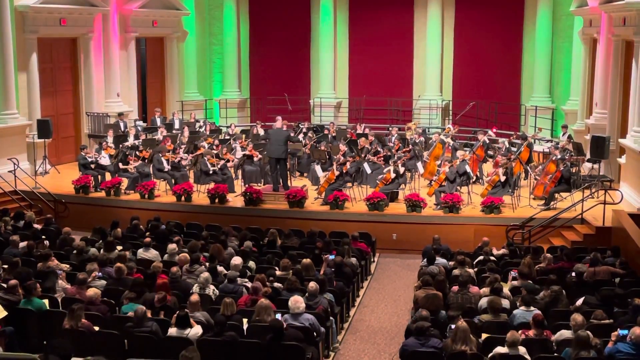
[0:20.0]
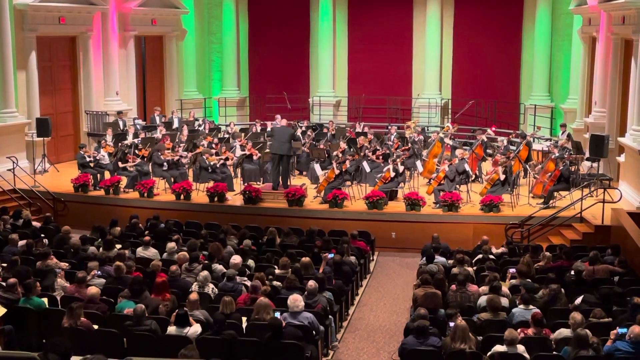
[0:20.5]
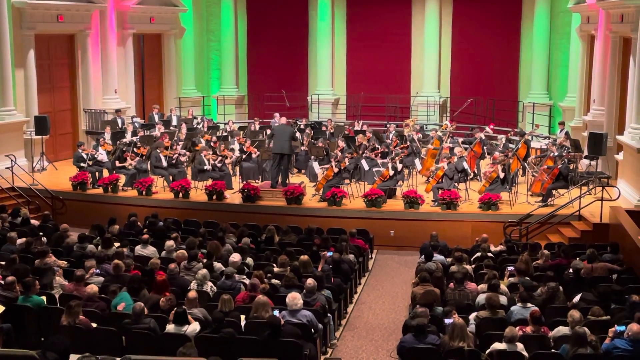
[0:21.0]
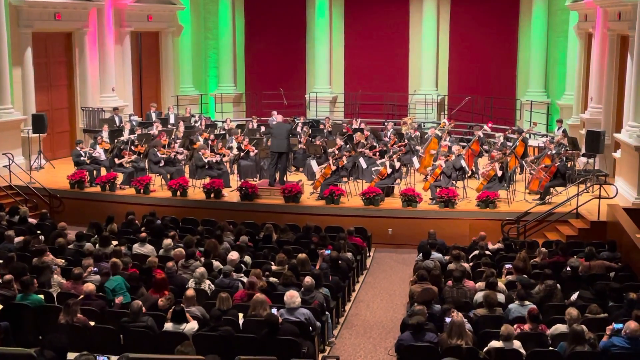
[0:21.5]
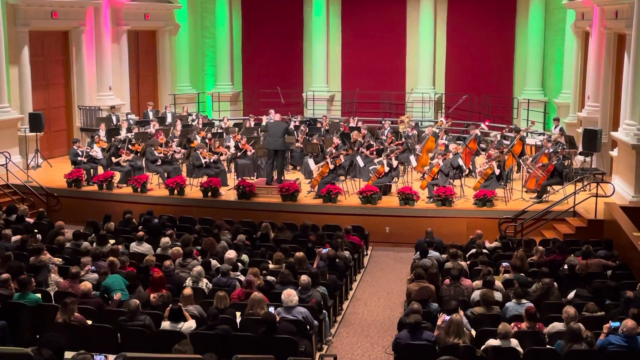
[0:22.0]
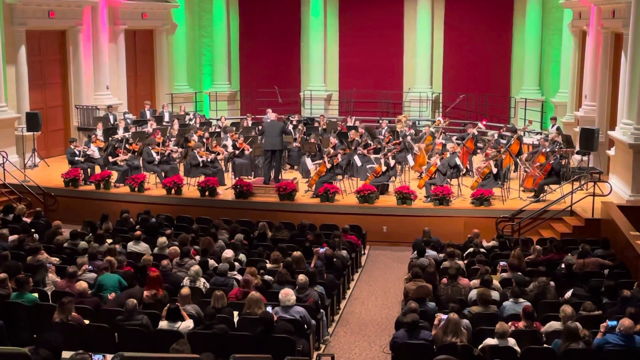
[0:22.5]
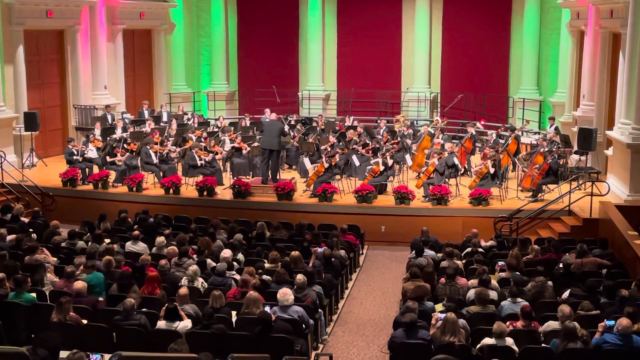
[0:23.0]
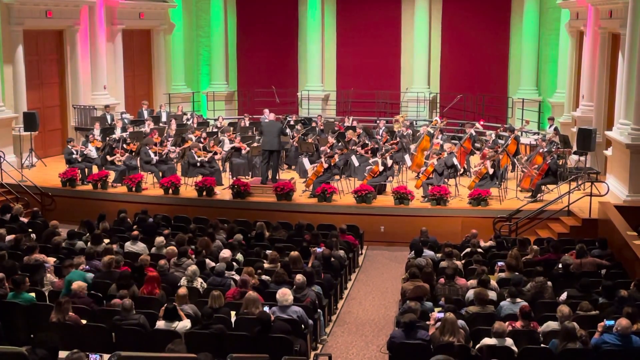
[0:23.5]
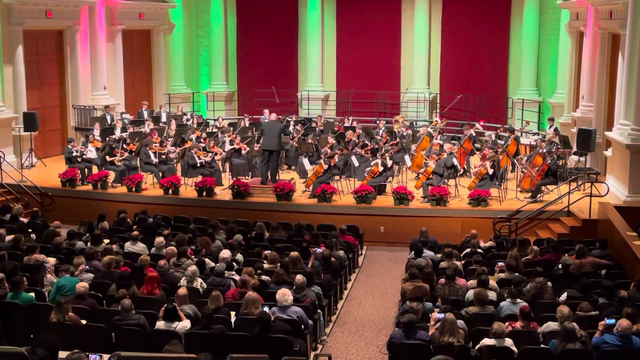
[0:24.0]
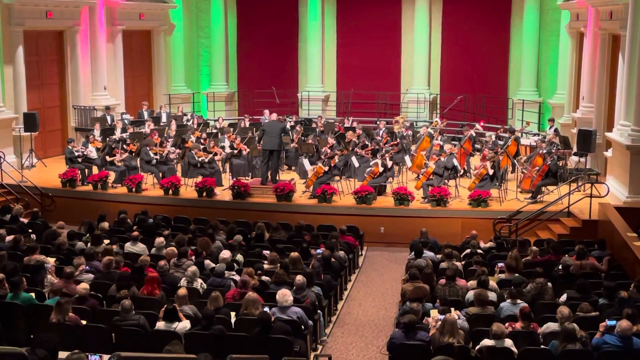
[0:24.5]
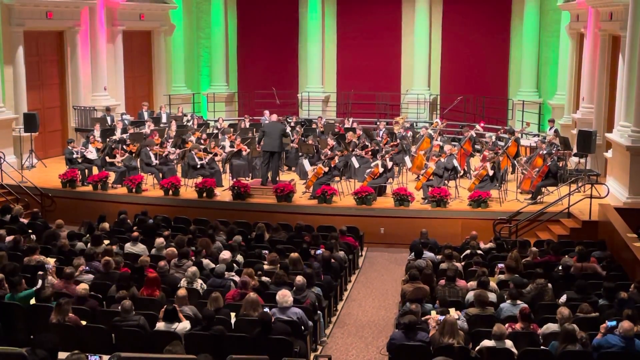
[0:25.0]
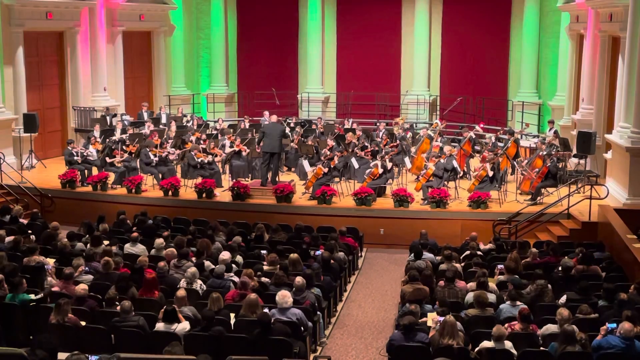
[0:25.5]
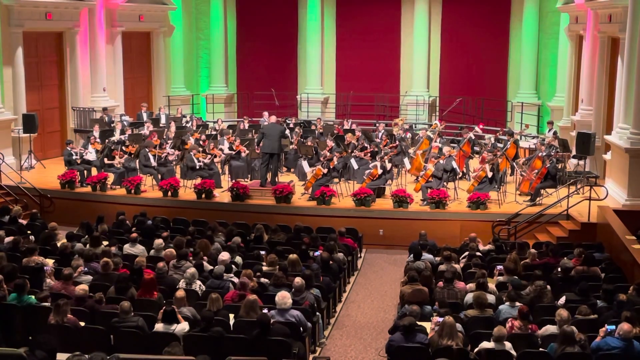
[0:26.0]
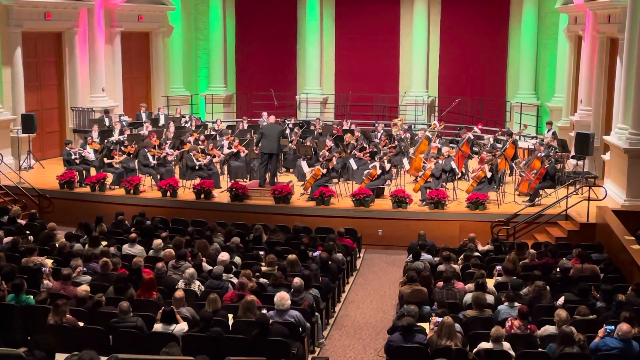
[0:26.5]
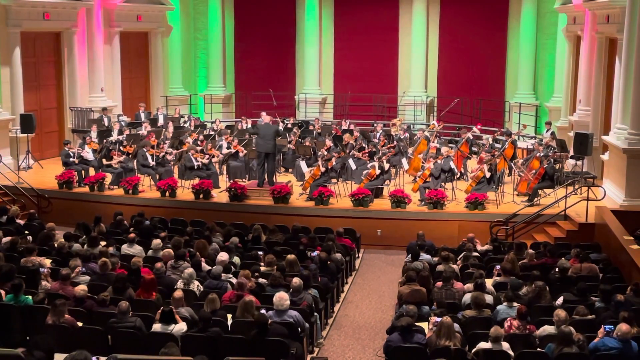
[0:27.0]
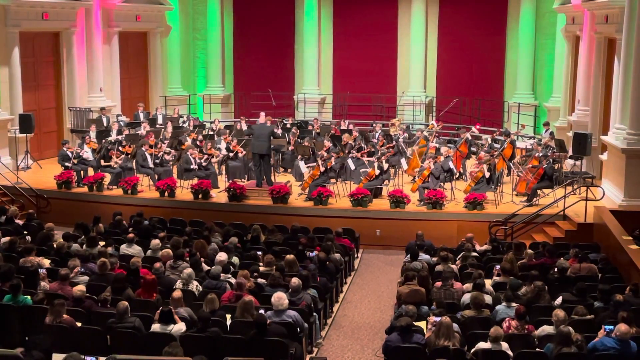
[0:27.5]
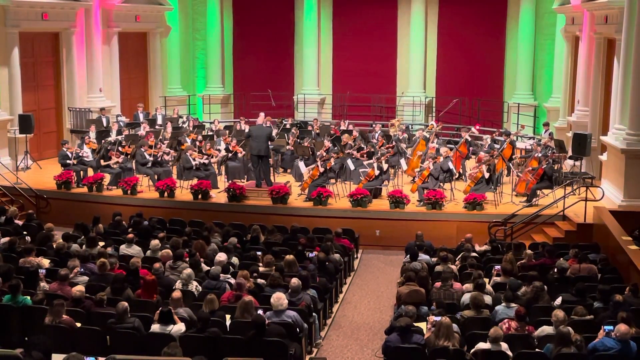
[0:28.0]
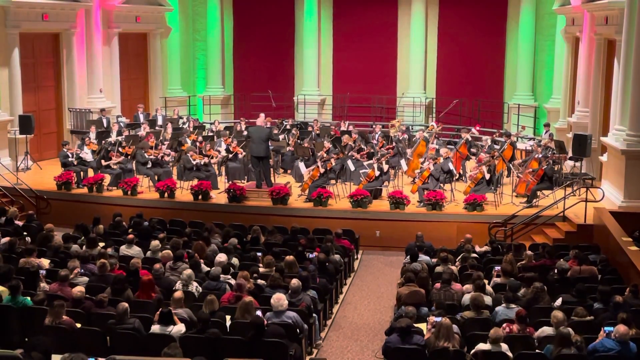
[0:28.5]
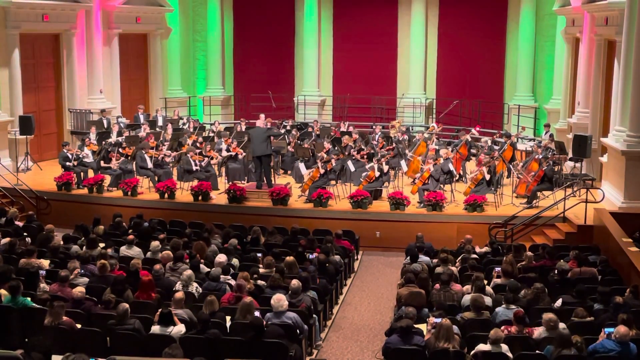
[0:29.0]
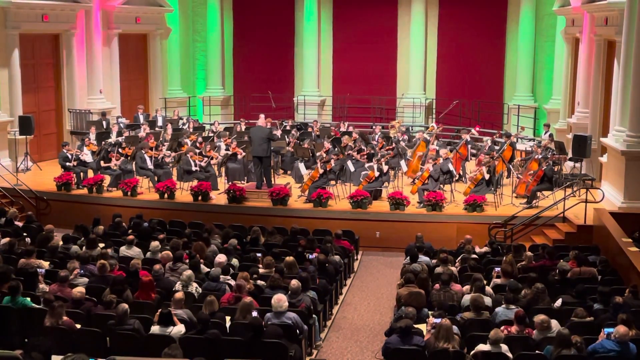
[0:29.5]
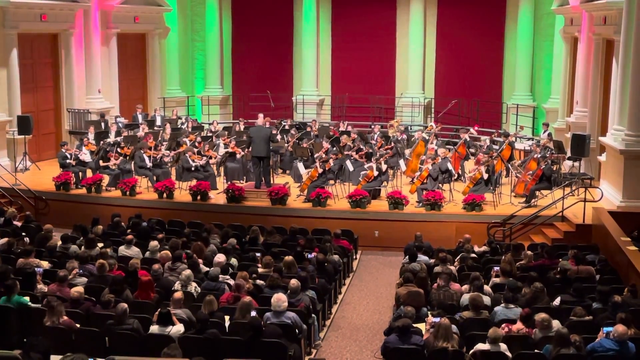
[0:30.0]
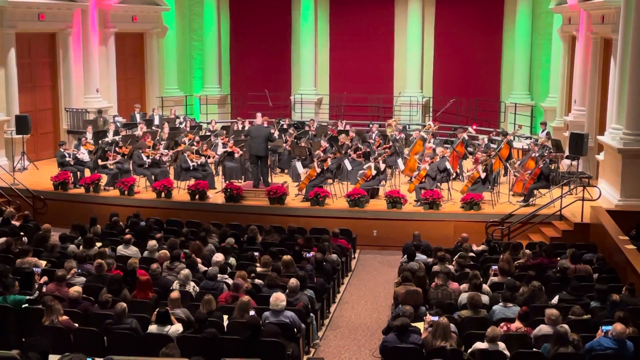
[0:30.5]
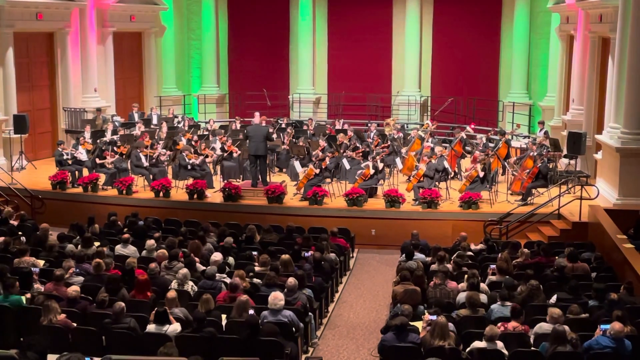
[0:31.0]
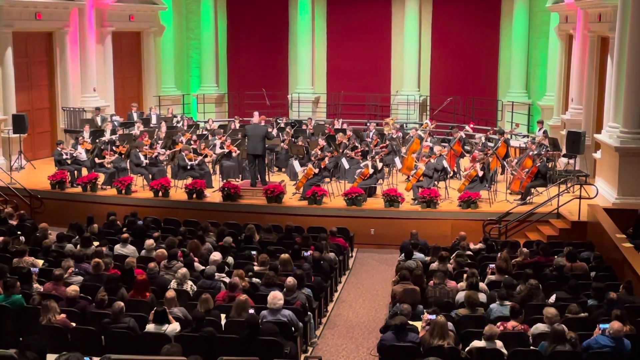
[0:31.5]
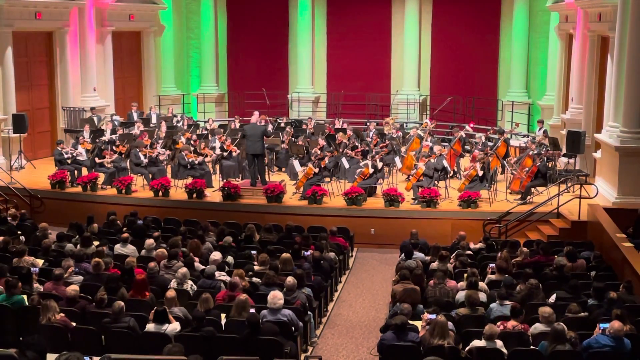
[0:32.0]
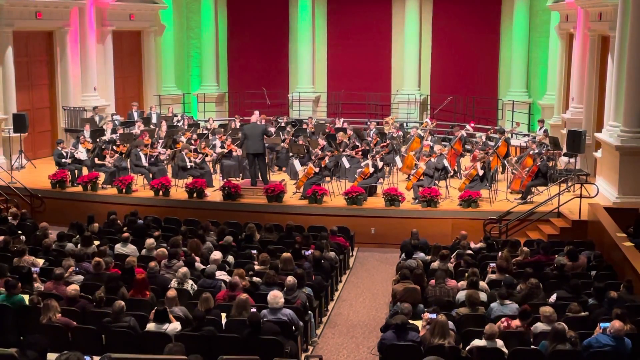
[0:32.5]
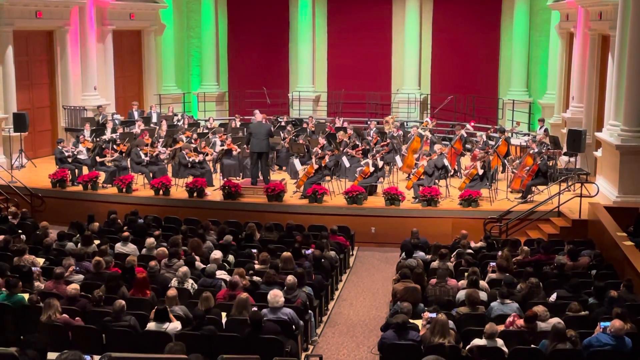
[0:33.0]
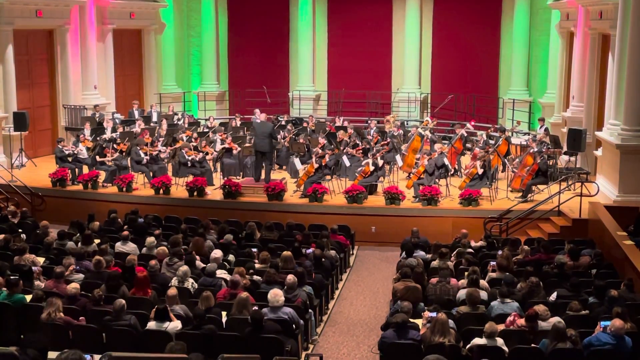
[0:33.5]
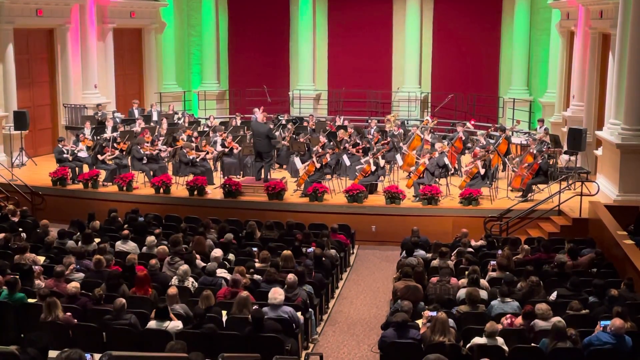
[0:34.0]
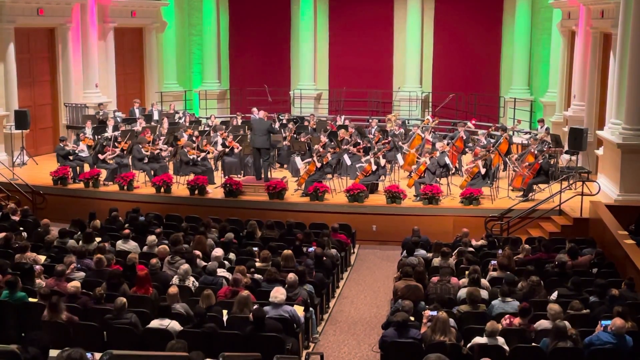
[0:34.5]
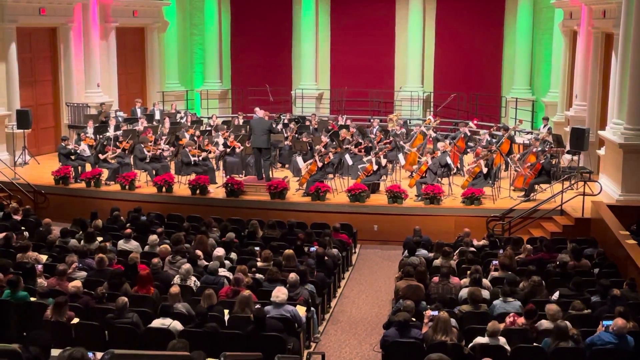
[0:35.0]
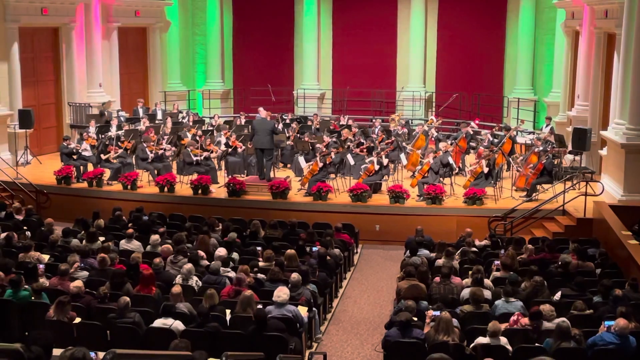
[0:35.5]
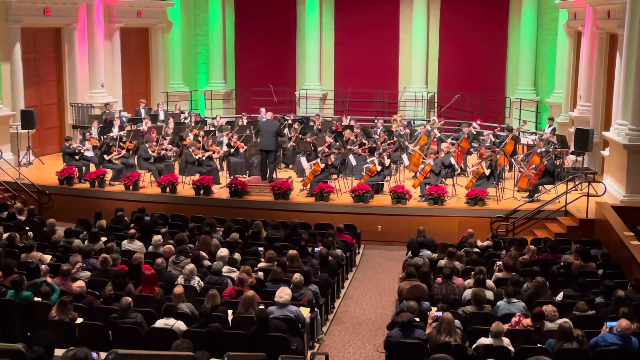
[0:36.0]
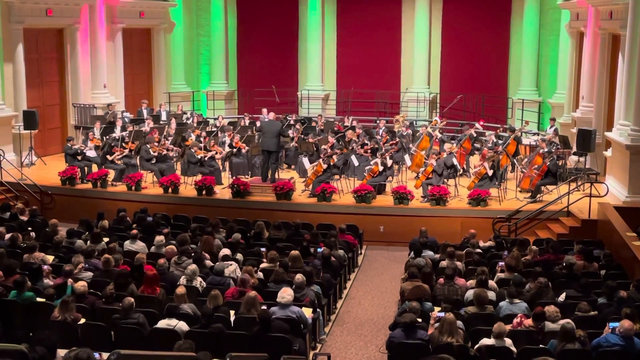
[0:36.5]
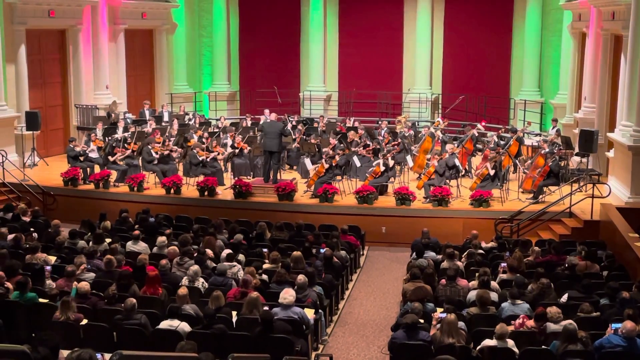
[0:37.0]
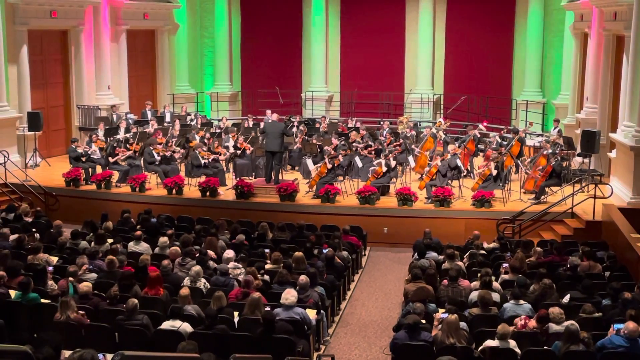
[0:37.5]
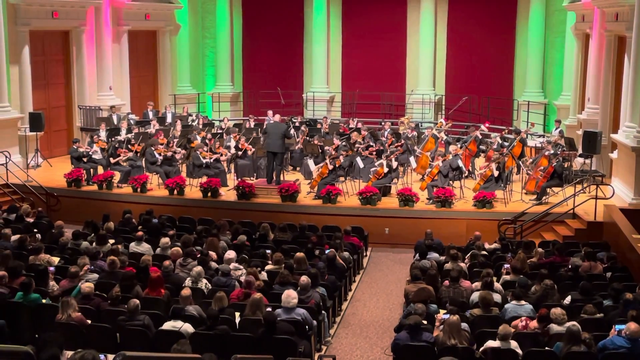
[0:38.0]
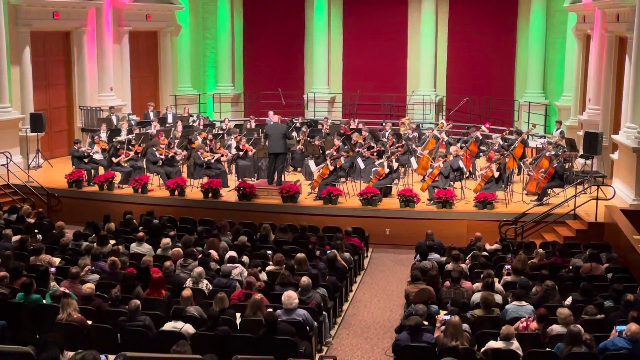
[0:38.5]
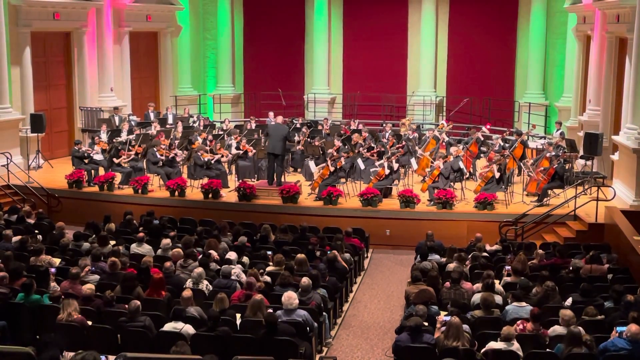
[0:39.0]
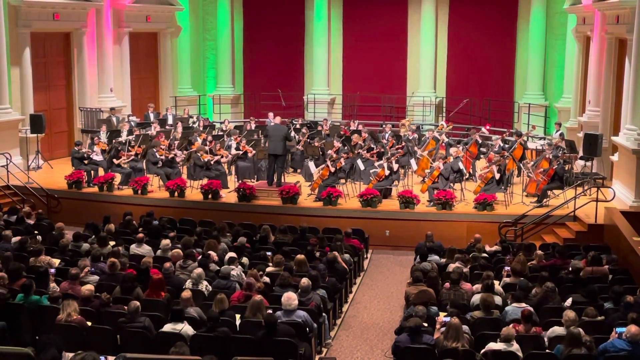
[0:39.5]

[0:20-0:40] More of the audience is shown. A few people in the audience move around, switching chairs, moving in general, or talking to each other. The conductor moves his arms a lot. Red flowers line the edges of the stage, there are stairs with rails on each side, and there are white pillars and red walls in the background. Two doors, one on each side of the stage, look to have exit signs above them. The conductor appears to be a man and apparently has white gloves on. The players' arms are all moving, and they are all wearing black outfits. A lady in the audience wearing a green outfit moves her seat next to someone else, and he puts his arm around her.